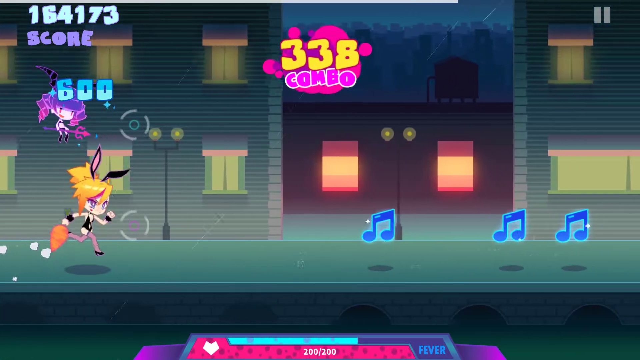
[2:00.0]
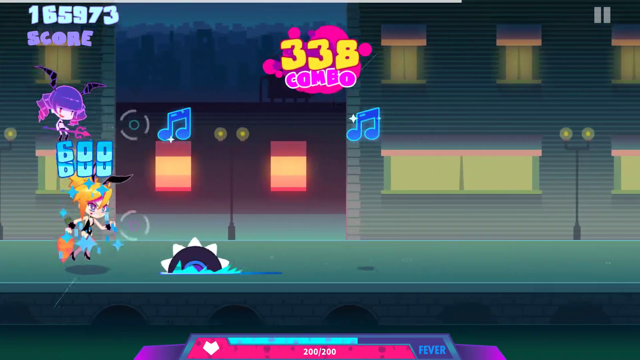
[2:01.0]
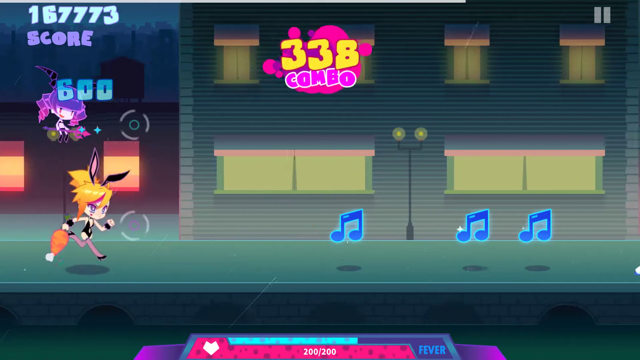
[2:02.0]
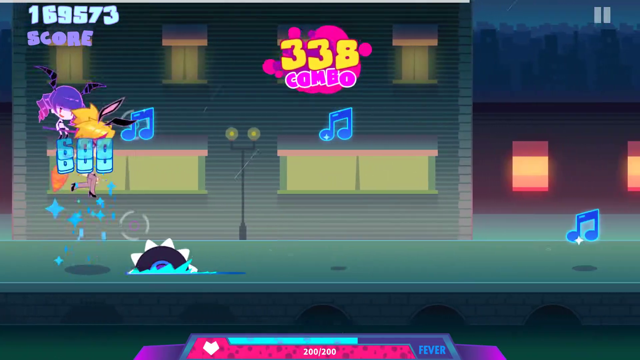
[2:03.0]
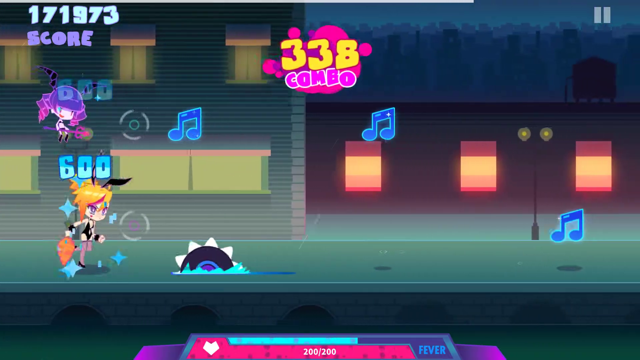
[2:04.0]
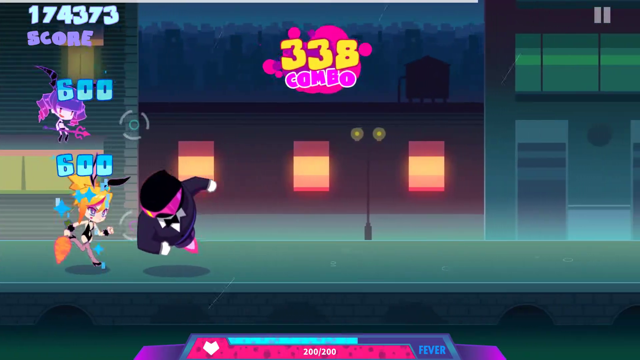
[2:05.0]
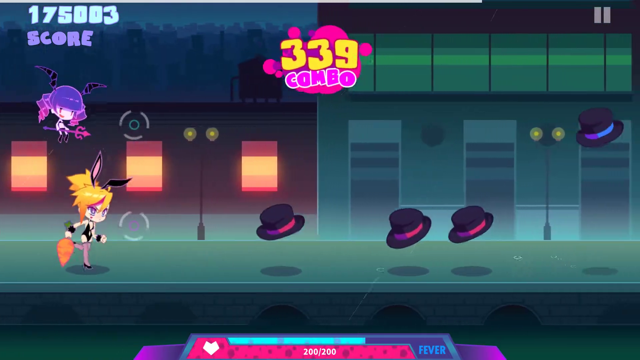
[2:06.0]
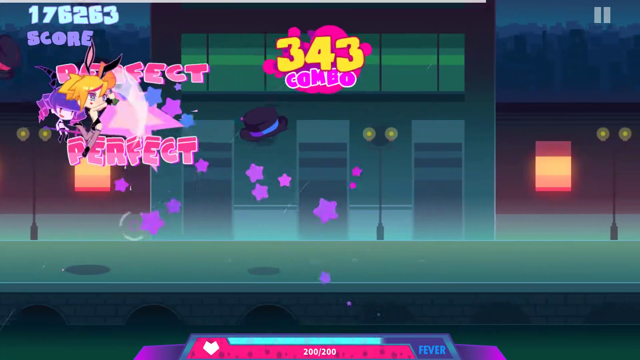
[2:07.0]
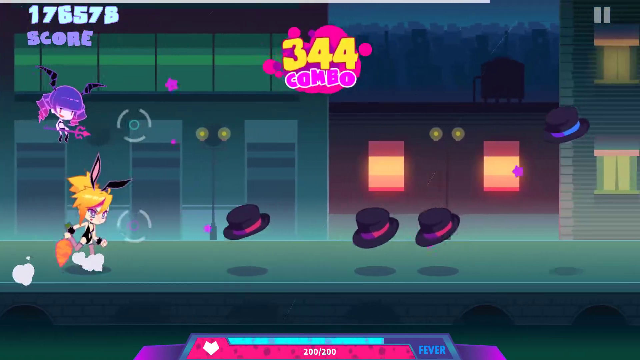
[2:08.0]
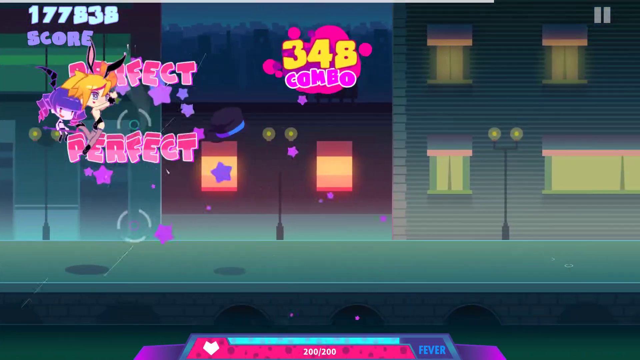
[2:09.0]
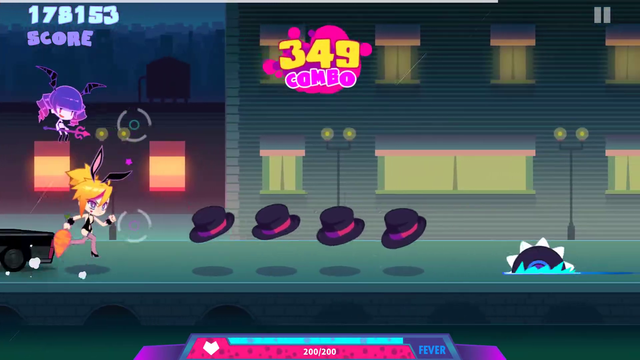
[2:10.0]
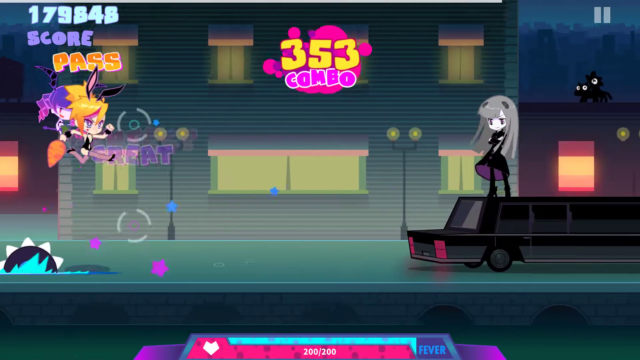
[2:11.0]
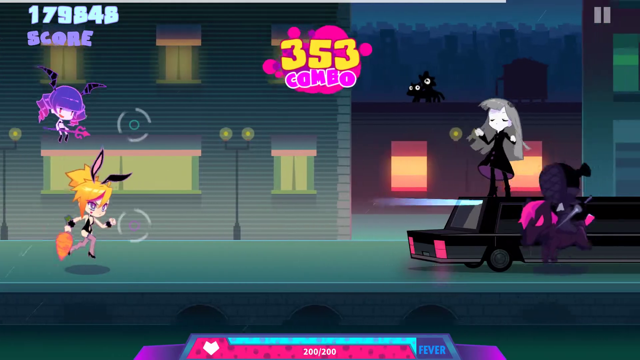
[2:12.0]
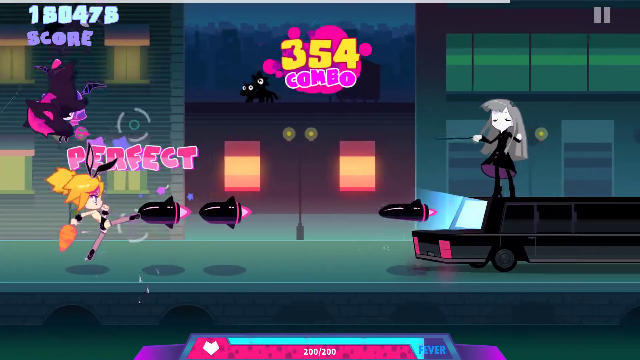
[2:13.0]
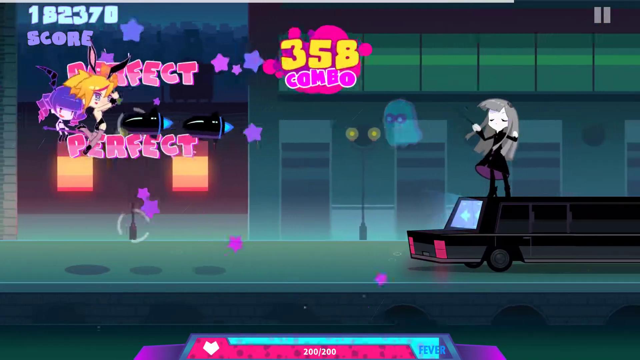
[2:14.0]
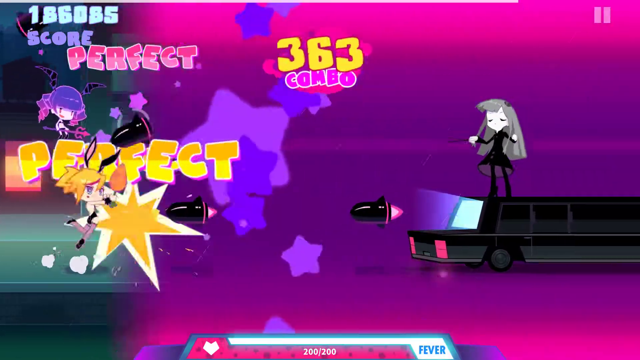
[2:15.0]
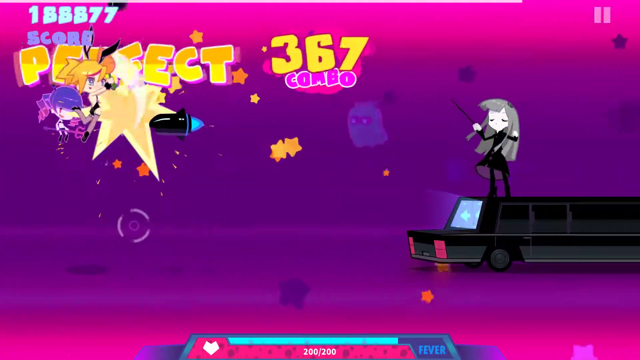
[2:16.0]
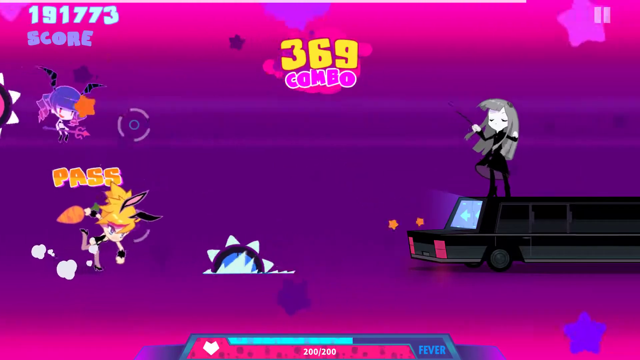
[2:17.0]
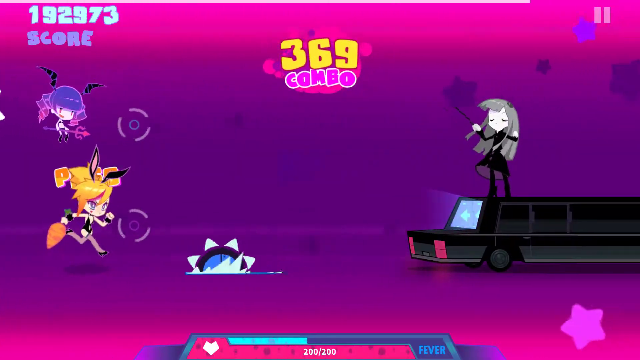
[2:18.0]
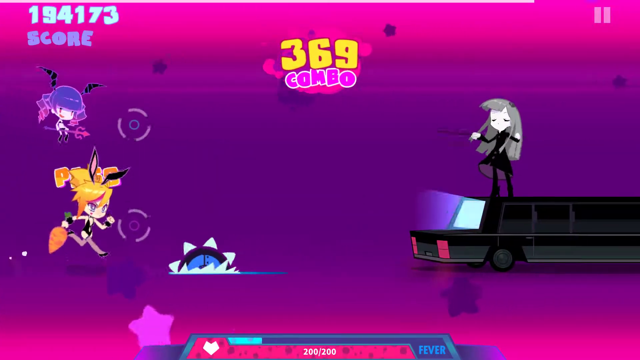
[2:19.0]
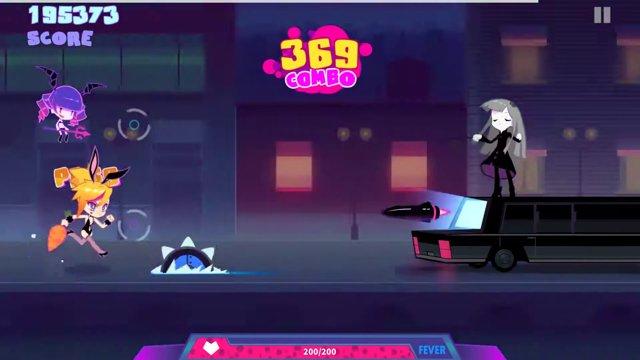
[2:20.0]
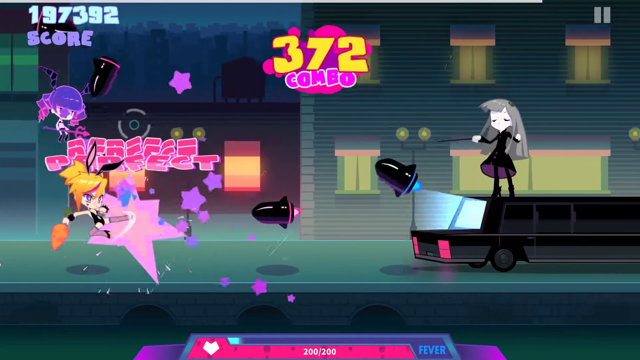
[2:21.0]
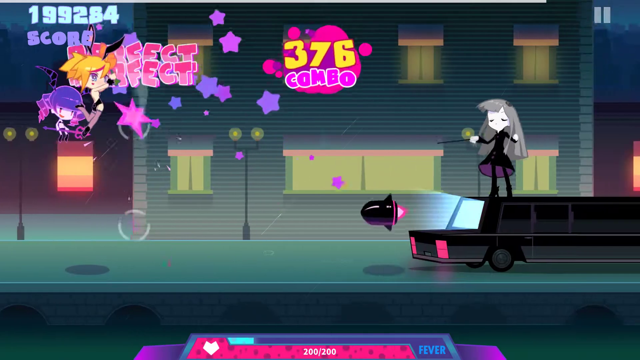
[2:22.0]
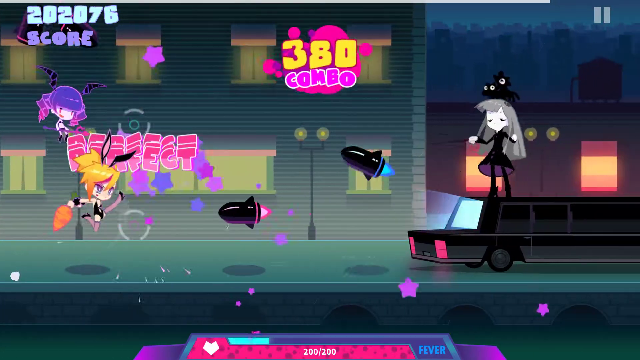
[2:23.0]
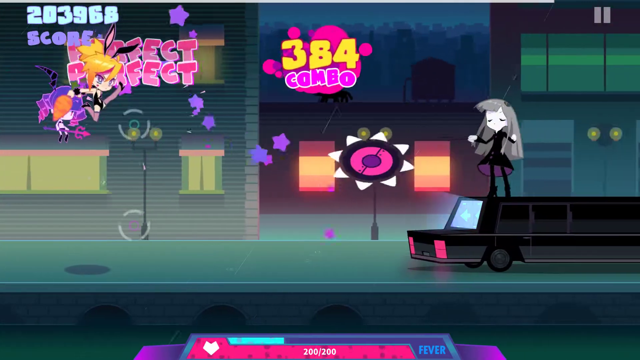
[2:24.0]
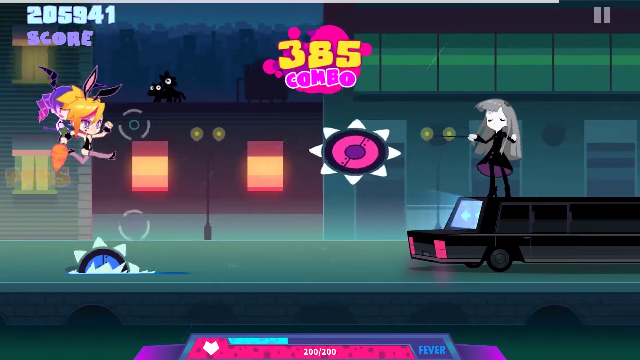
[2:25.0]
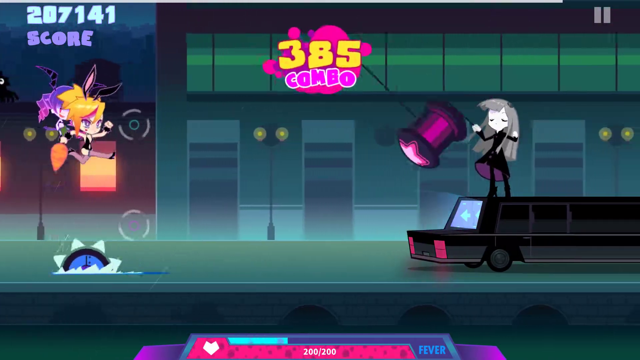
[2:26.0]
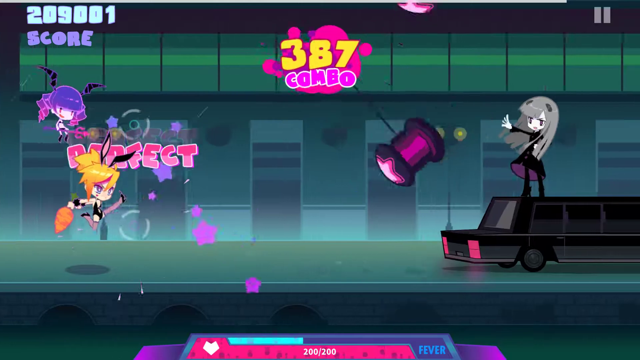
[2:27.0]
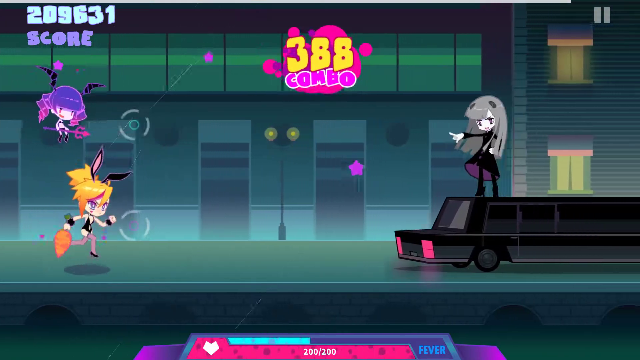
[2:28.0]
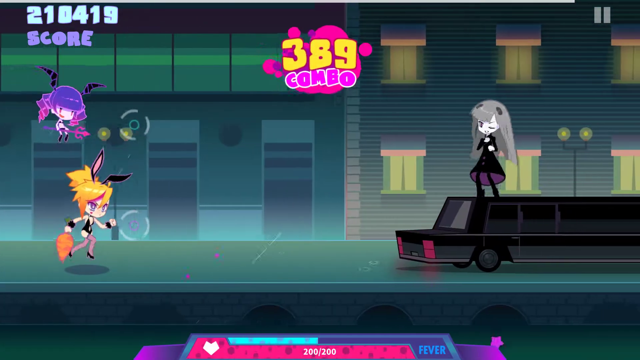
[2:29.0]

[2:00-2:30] In the video game, an anime character wears black bunny ears and a tight, black, leather-looking tank-top outfit that goes down over her front, leaving her shoulders and upper legs visible, along with stockings and black high heels. A small anime character wearing a purple hat floats above her. There is a street and a sidewalk, and she walks or runs along the sidewalk, beside which are different buildings and houses: a house with four windows up top and two large windows beneath them, a small black and red building with lit-up orange windows, and a building made up of three doors with a large, long window above them. Objects come at her as she runs, and every time she catches one the word "perfect" appears above her in pink. Top hats with blue and white stripes around the rim come at her. A limousine then appears, a woman anime character in a black dress is standing on its back, and objects start coming out of the limousine, which the bunny-eared character catches.